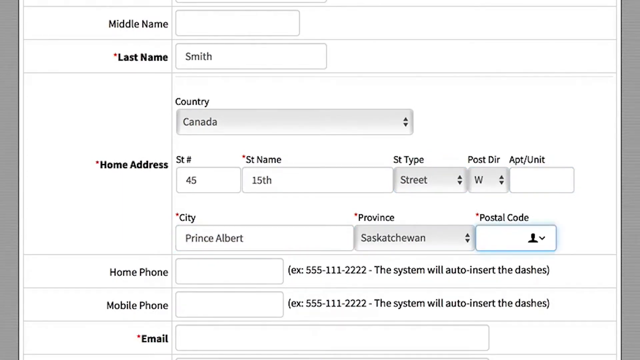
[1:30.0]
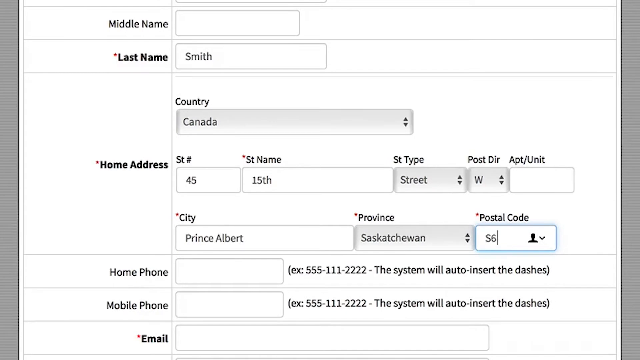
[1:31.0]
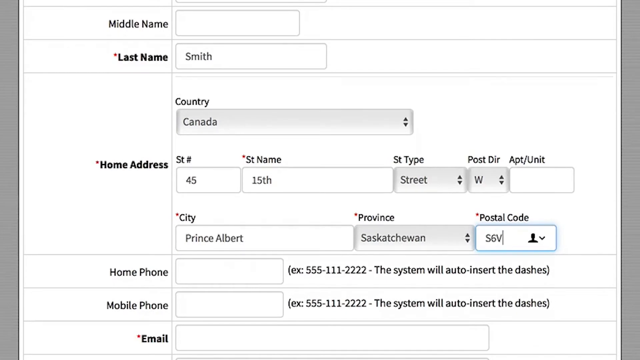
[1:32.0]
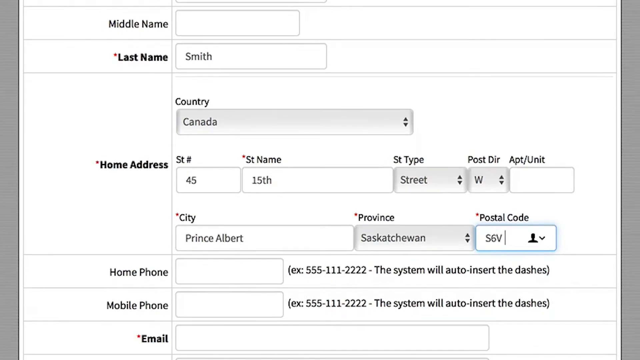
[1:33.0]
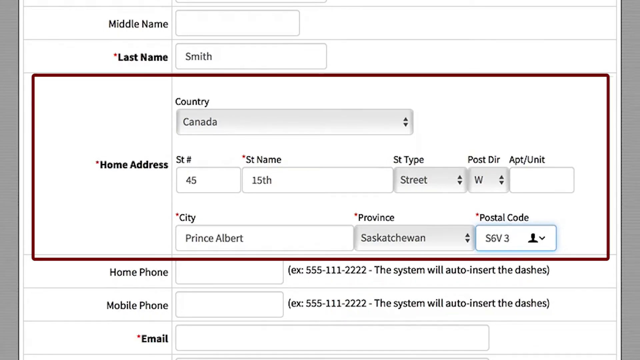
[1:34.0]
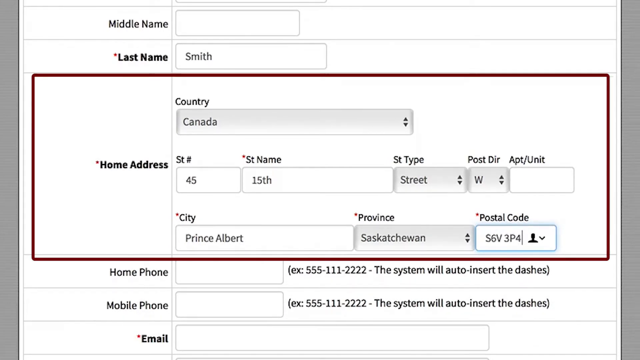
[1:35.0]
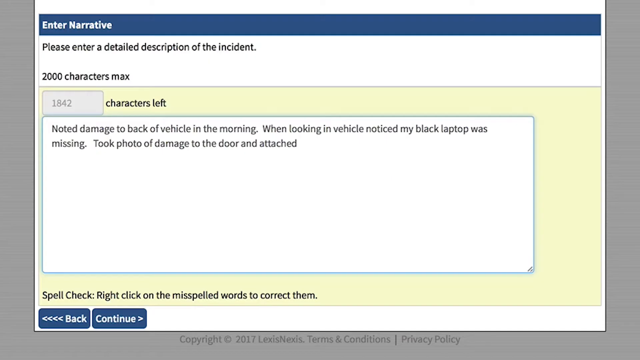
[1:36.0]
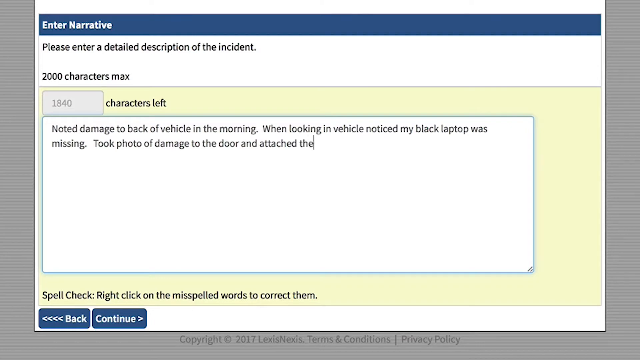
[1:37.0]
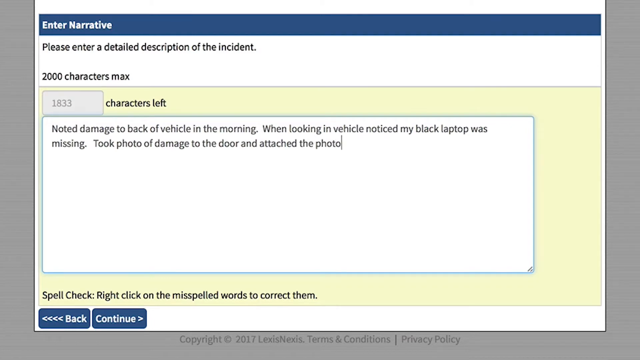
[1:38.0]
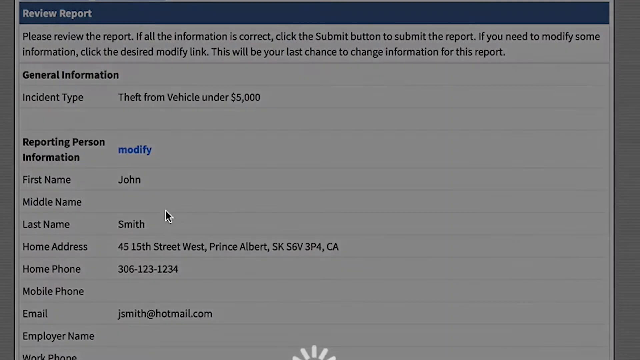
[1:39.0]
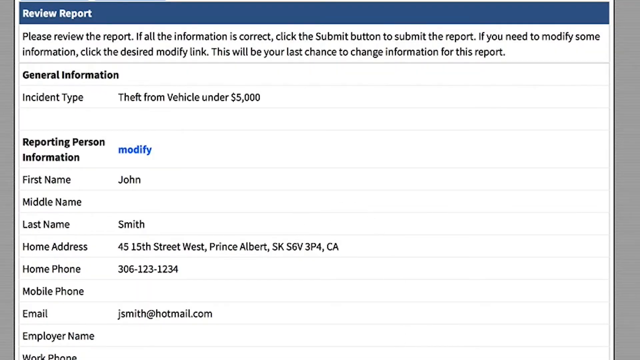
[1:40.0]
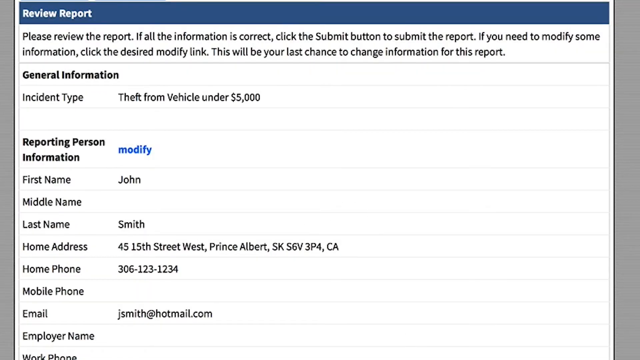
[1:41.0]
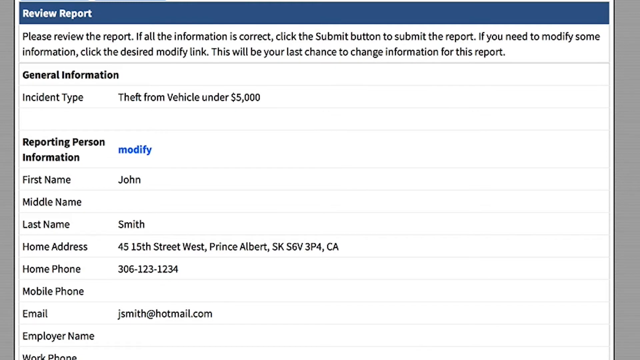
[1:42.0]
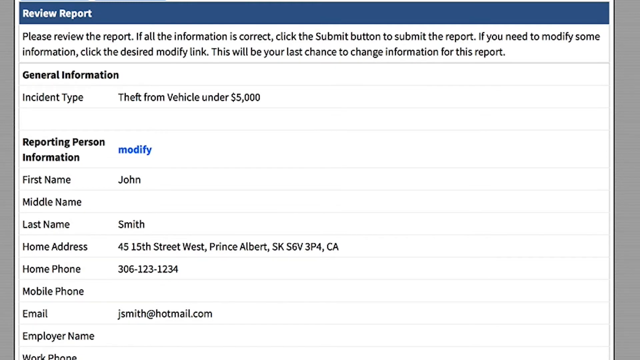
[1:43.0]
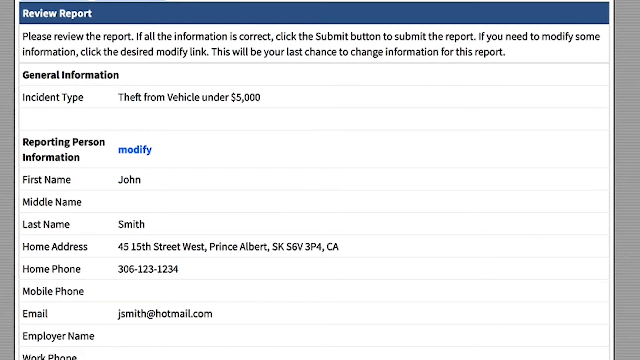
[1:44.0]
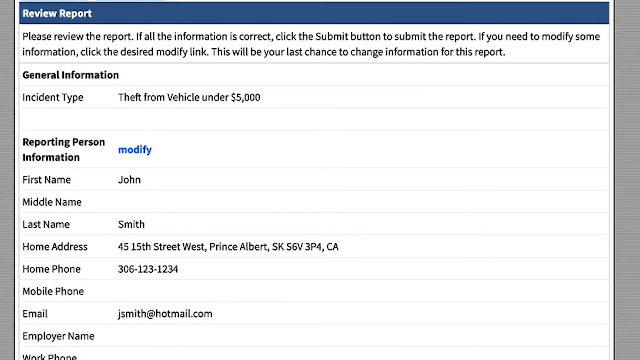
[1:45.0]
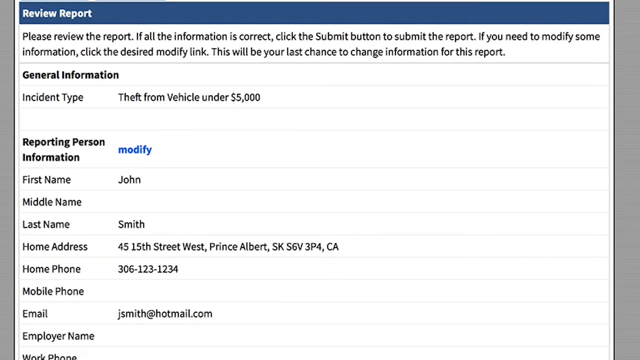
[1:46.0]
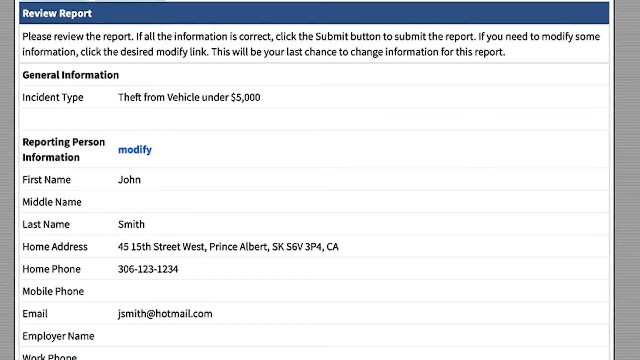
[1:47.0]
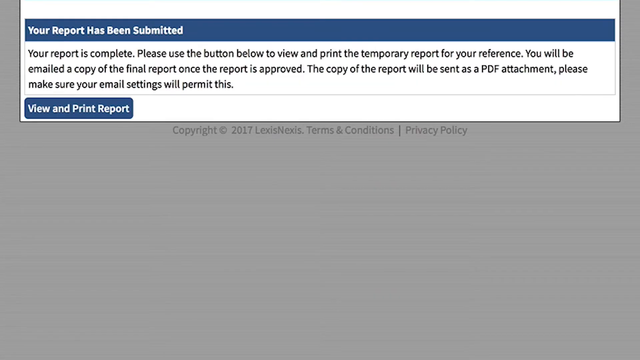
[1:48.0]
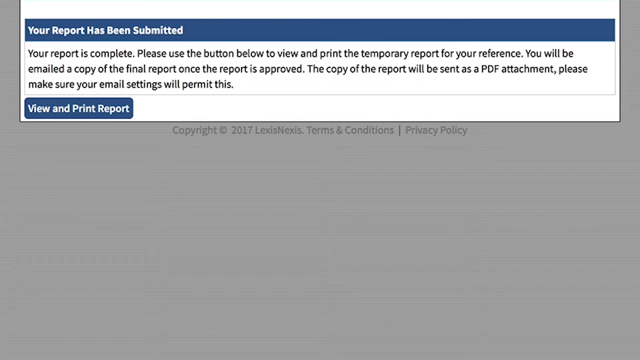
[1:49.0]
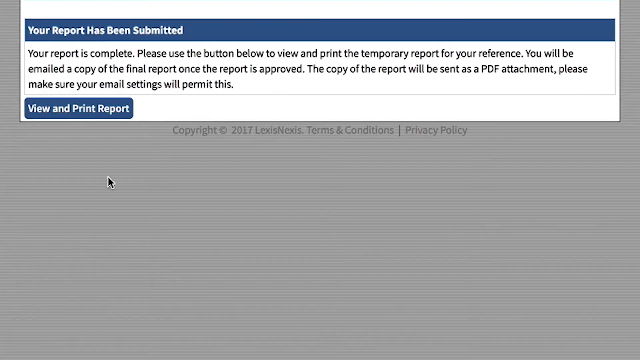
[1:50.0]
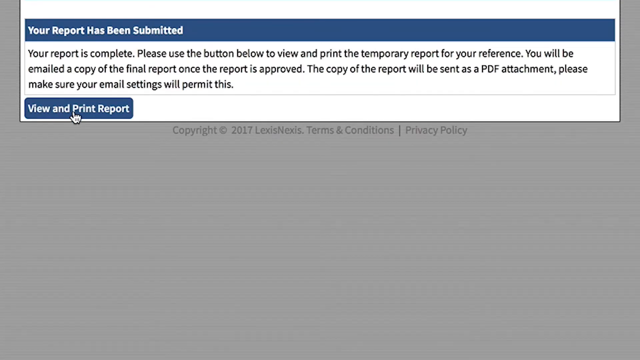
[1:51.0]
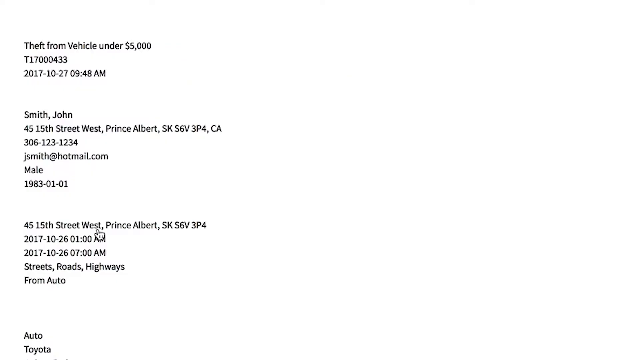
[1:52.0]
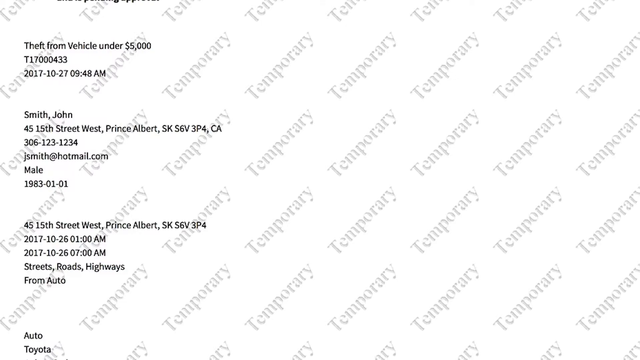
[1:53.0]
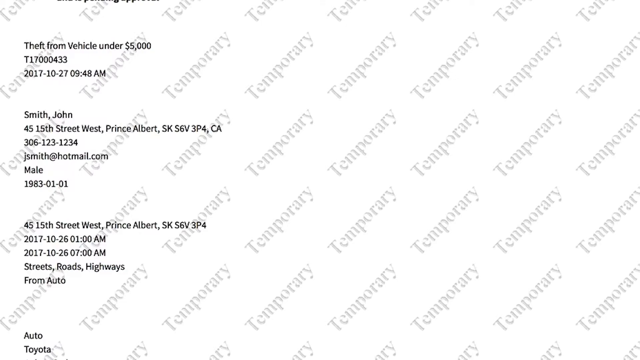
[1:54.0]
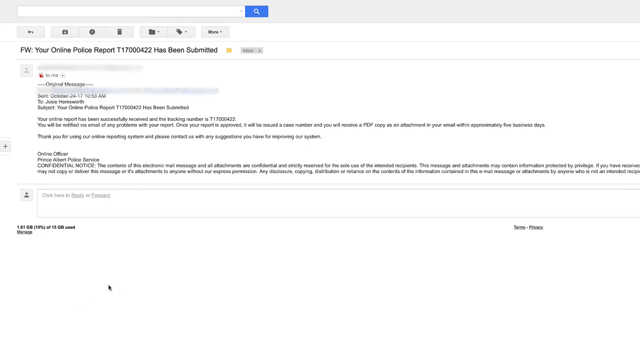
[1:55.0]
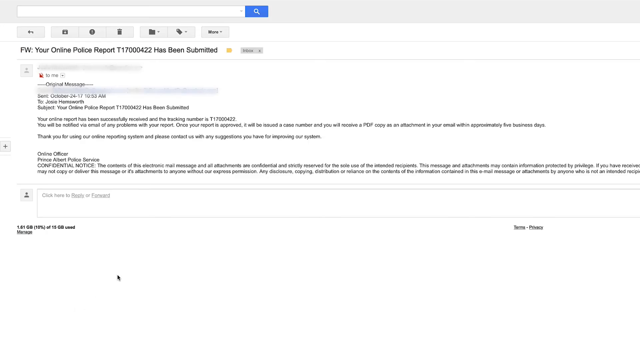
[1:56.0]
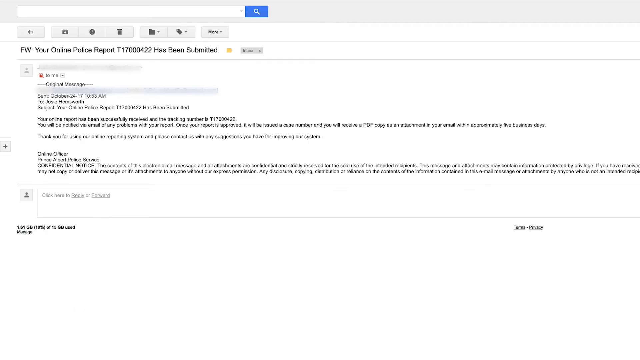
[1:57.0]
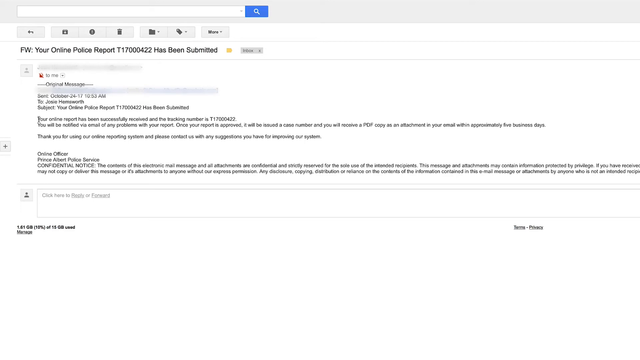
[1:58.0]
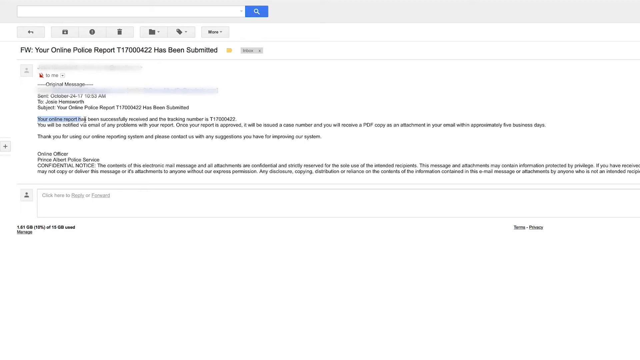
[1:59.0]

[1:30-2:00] The electronic form for reporting an incident or crime online continues, with home address, city, province and postal code fields; the city is Prince Albert and the province Saskatchewan. Text reads "enter narrative please enter a detailed description", followed by a prompt to enter the description of the incident, with a limit of "2000 characters maximum". An example narrative reads "noted damage to back of a vehicle in the morning. When looking in the vehicle, notice my black laptop was missing, took photos of the damage to the door and attached the photo."